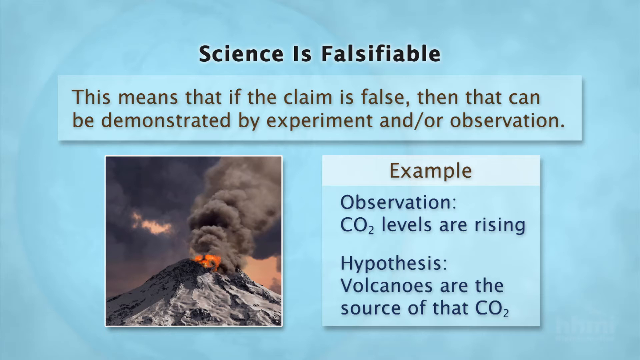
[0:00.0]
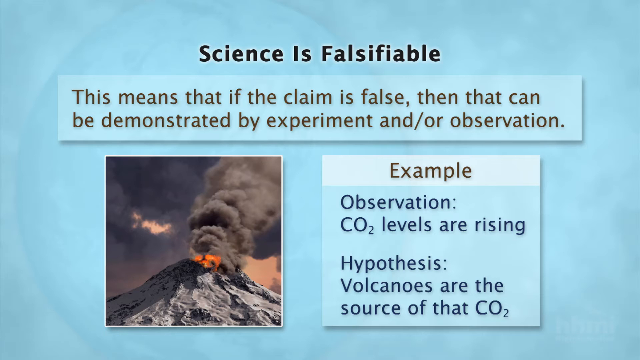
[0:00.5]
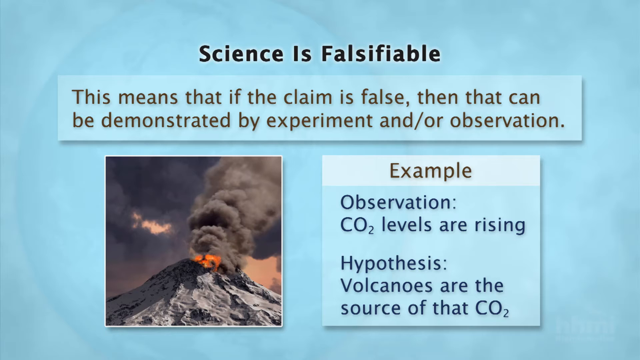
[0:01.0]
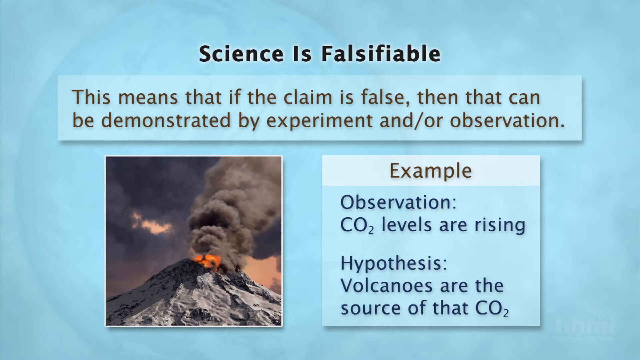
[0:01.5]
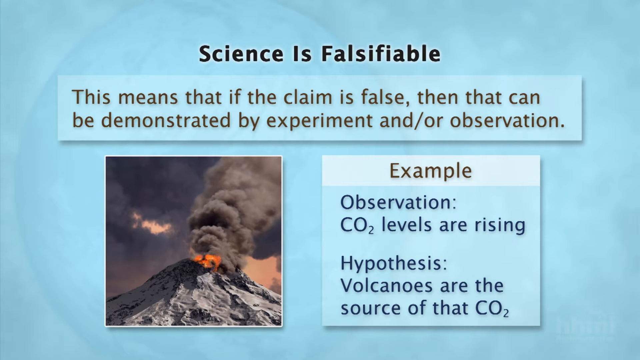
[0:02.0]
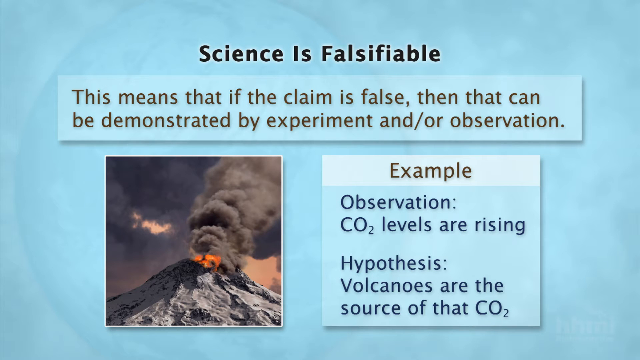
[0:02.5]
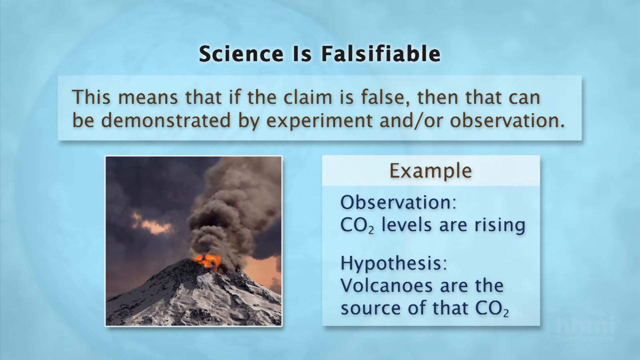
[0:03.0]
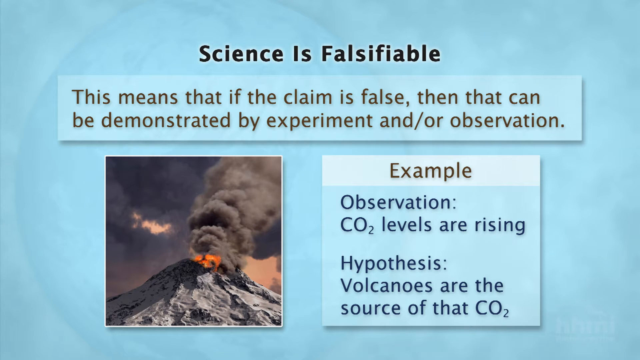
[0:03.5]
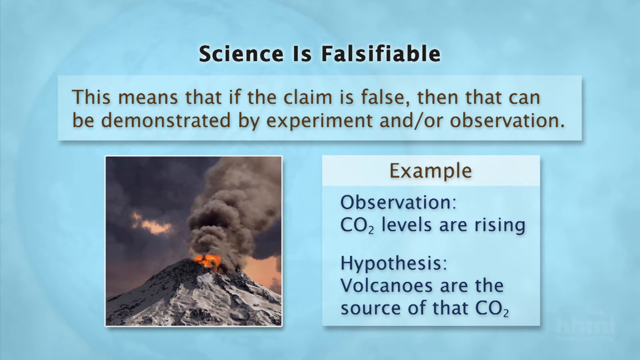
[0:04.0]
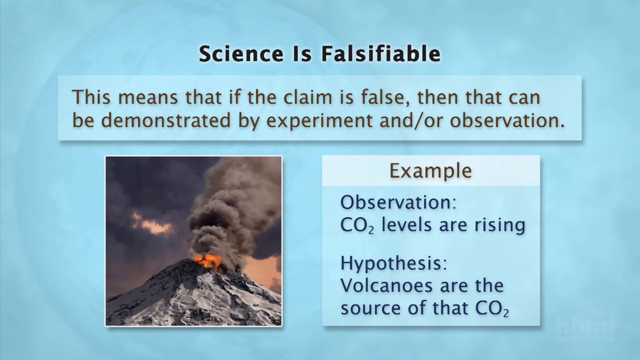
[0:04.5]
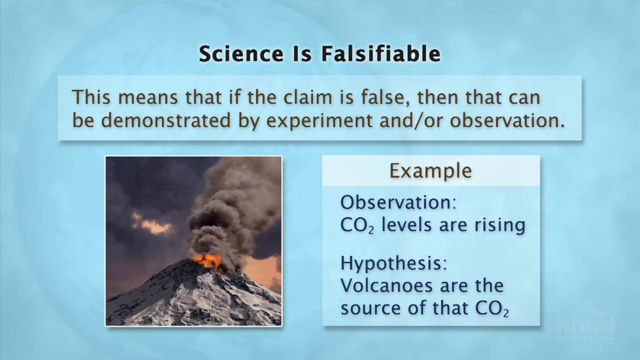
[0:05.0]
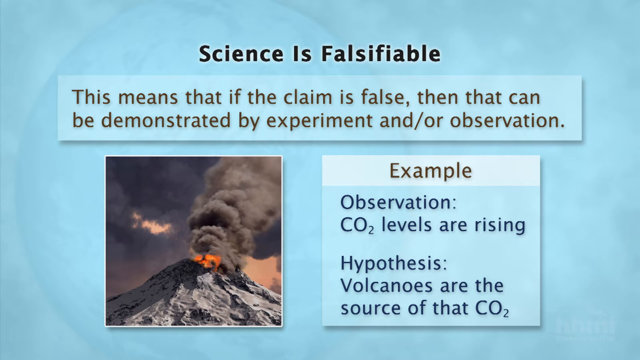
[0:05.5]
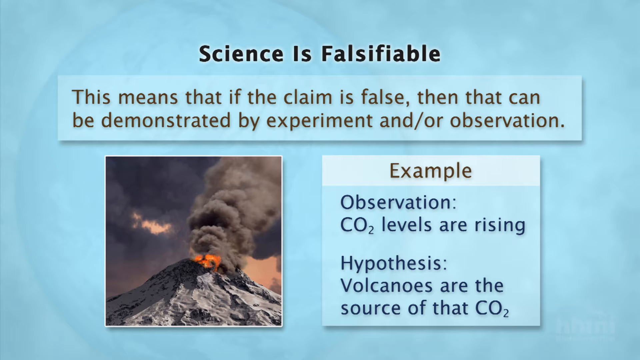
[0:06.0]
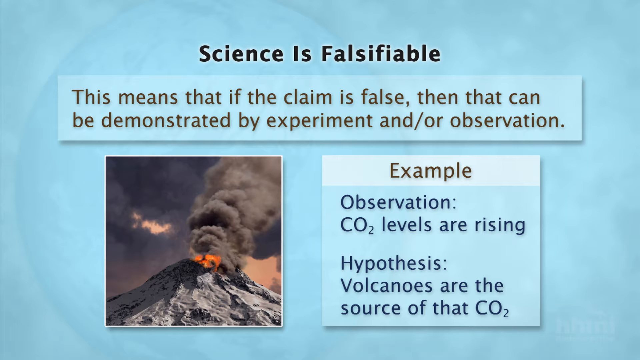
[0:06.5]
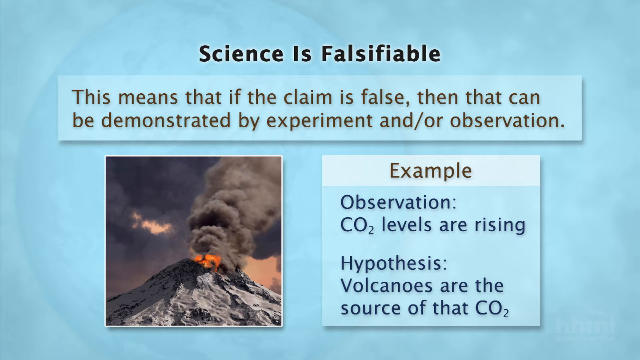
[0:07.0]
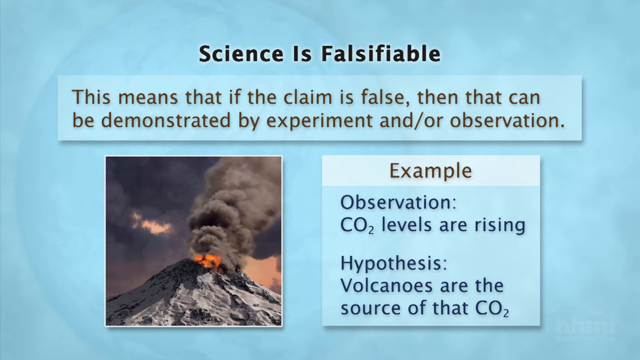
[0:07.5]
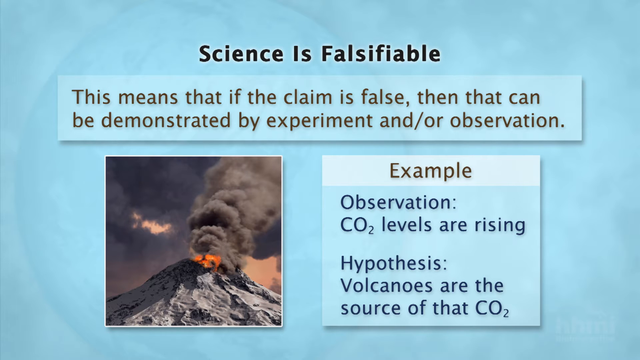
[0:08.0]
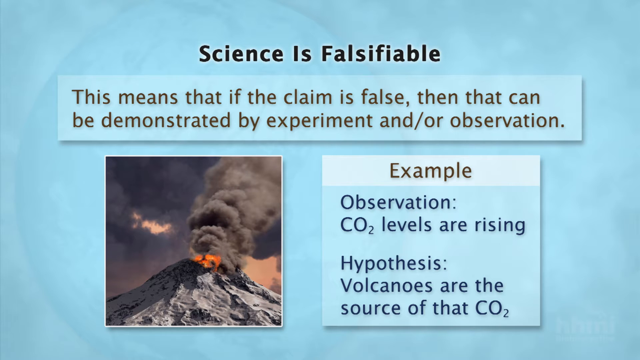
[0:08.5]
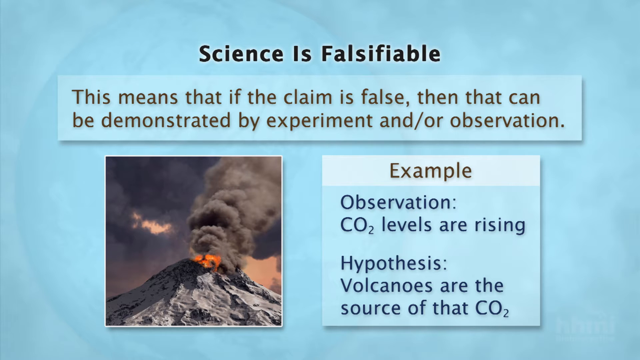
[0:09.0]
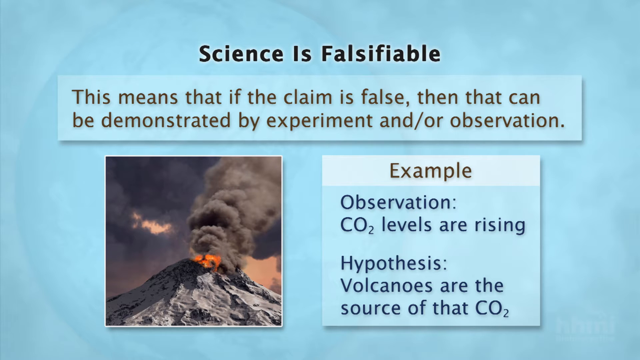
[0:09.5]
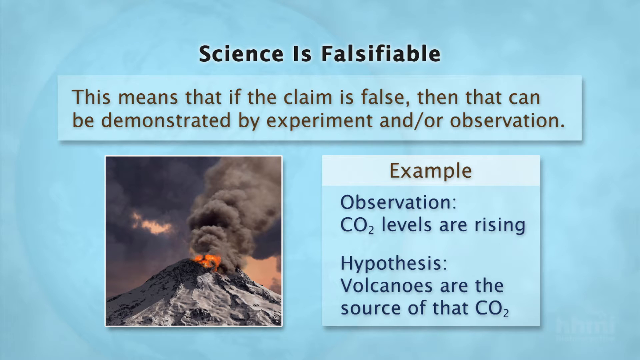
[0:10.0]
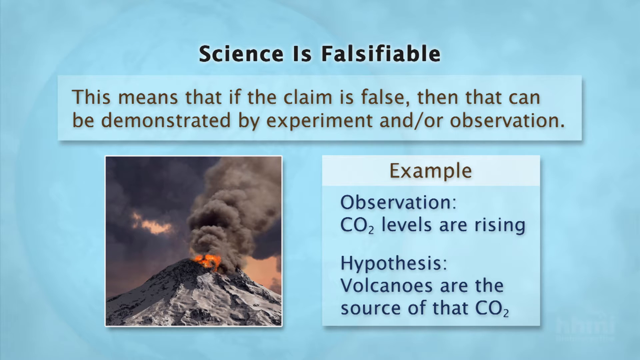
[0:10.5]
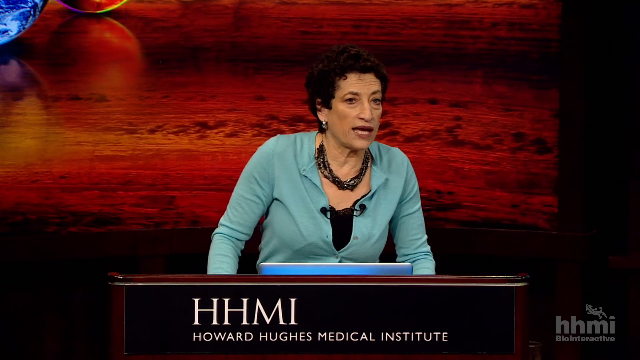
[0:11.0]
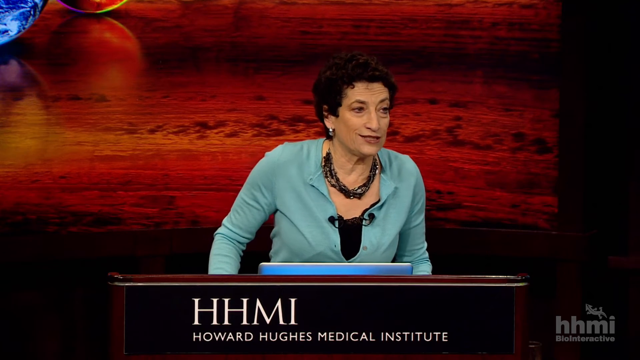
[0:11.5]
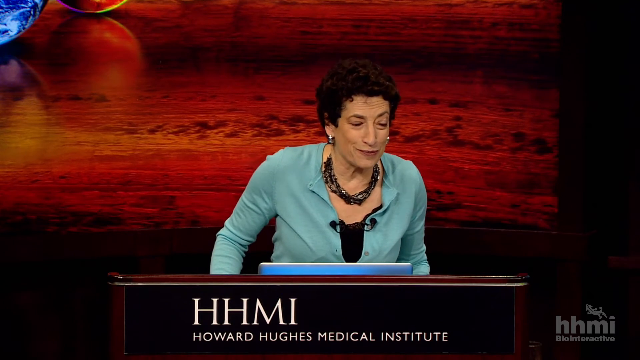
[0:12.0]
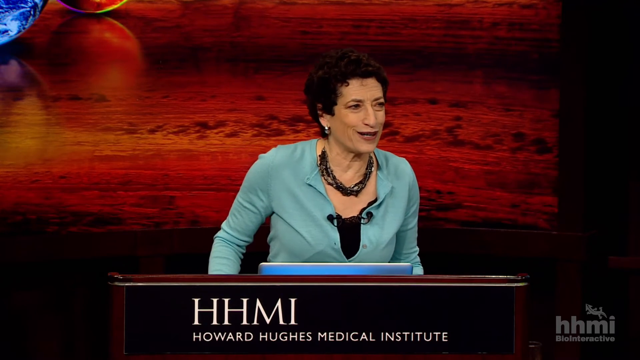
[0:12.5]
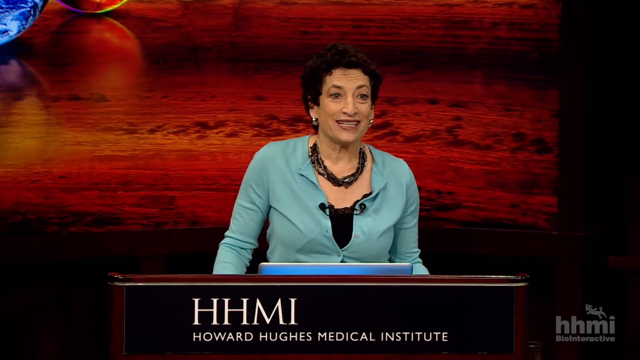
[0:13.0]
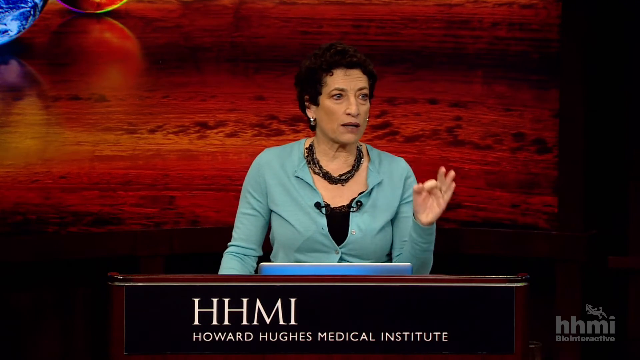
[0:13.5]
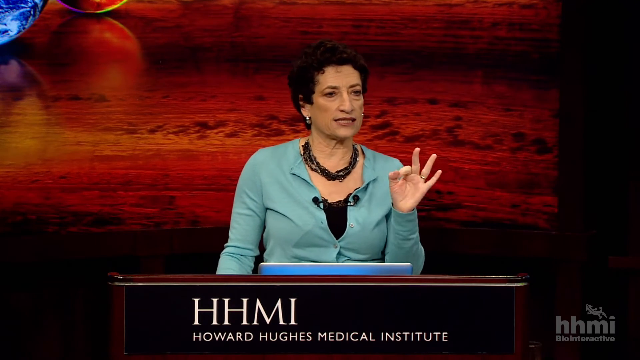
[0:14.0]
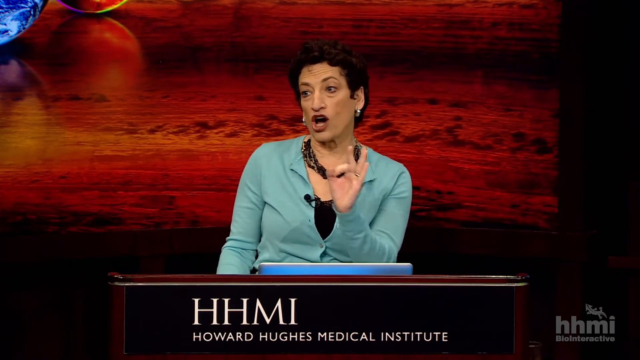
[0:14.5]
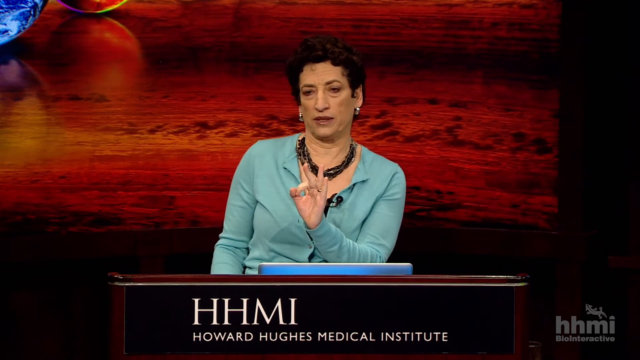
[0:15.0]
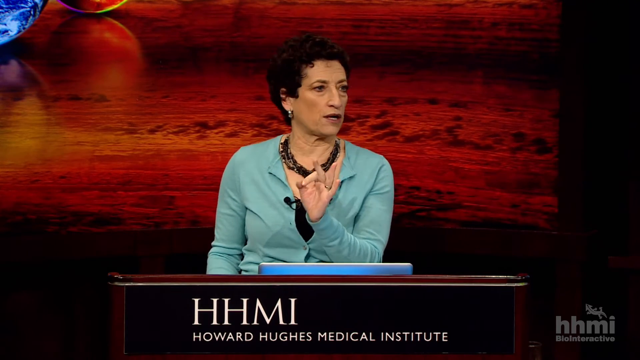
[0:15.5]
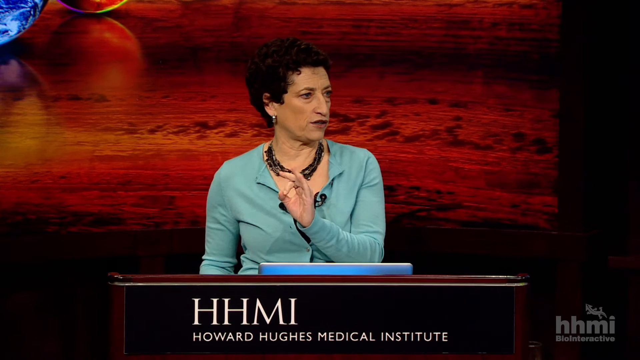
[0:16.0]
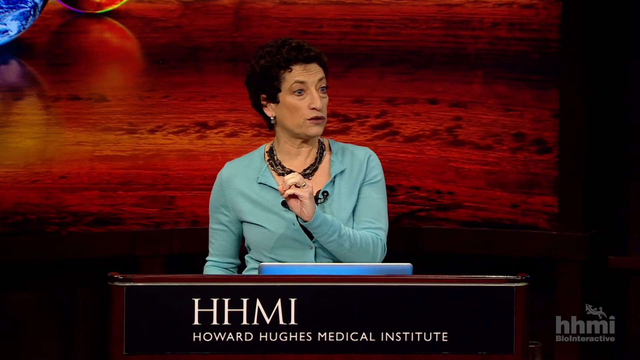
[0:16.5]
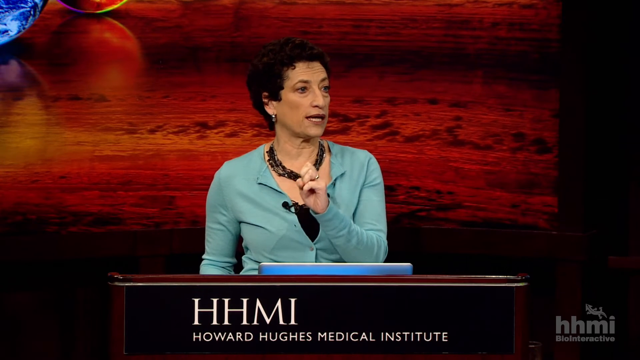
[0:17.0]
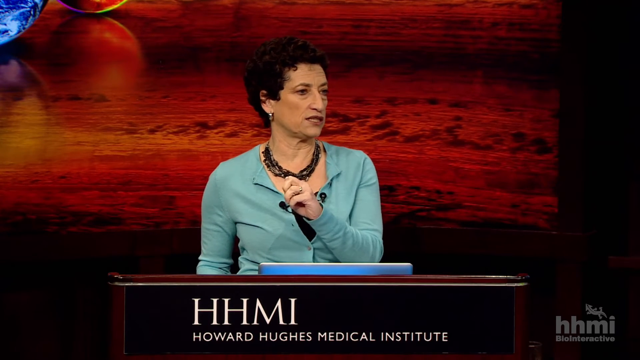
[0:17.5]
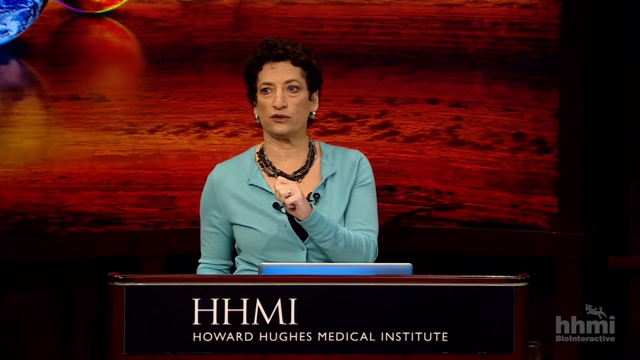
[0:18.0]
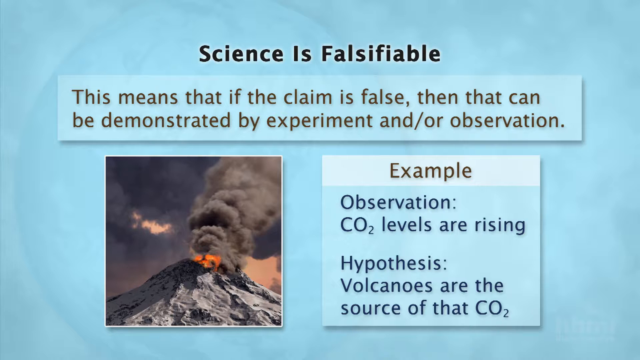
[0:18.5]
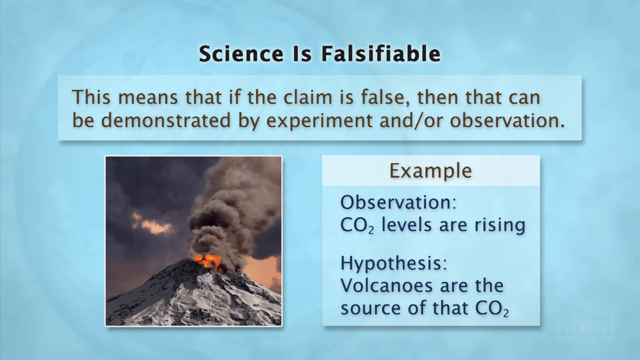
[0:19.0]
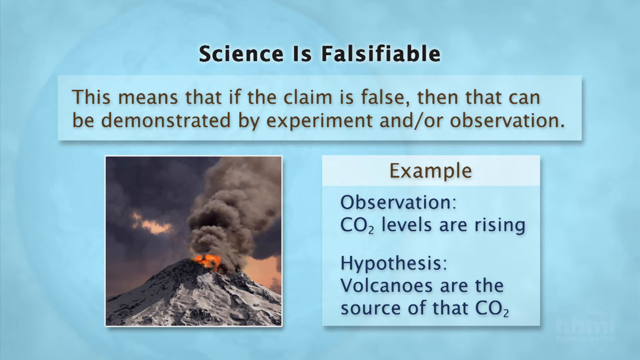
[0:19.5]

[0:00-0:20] The video begins with a title screen that says "science is falsifiable" on a light blue background, with a couple of text tables containing different information. At the top it says "this means that if the claim is false, then that can be demonstrated by experiment and or observation." Below that, in another section, it says "example observation, CO2 levels are rising. Hypothesis, volcanoes are the source of that CO2." To the left is an image of an erupting volcano. The video then moves to a screen with a speaker: a woman with short dark hair wearing a green blouse and a black necklace. The backdrop behind her might be wallpaper or part of a slideshow and looks like wood. Text says "HHMI, Howard Hughes Medical Institute." The woman looks around and speaks while moving her hands, quite animated.